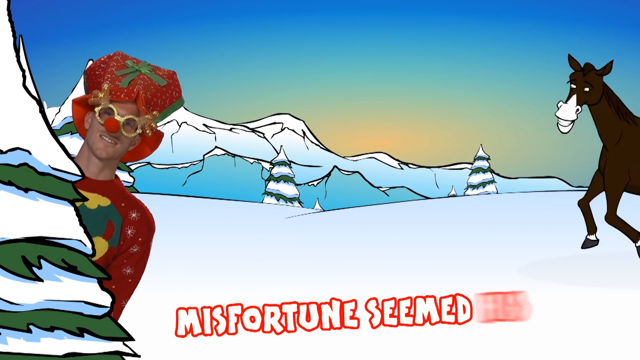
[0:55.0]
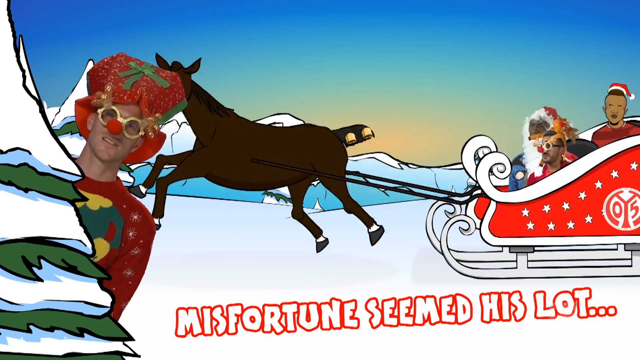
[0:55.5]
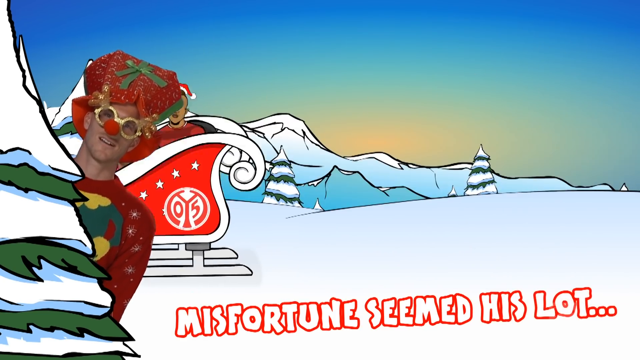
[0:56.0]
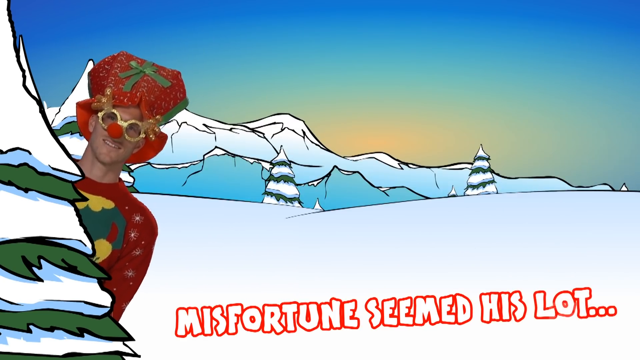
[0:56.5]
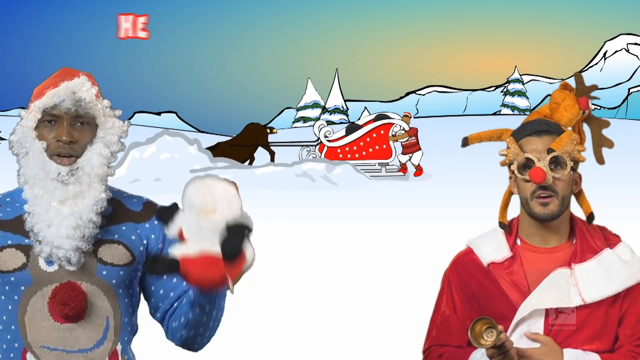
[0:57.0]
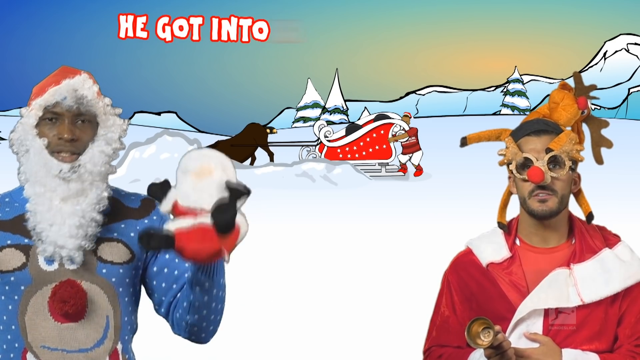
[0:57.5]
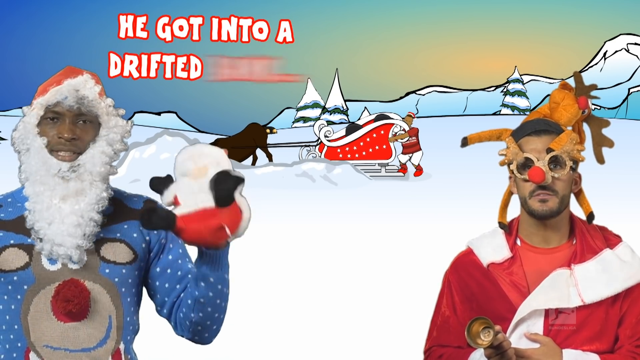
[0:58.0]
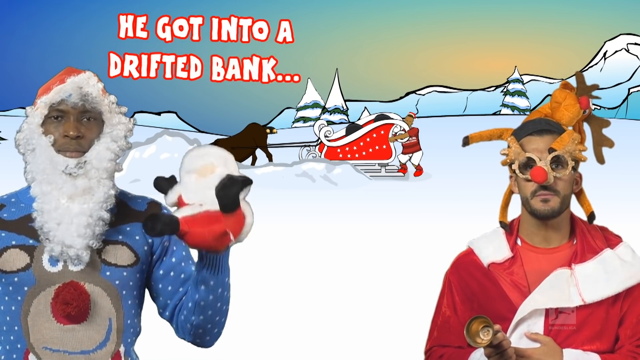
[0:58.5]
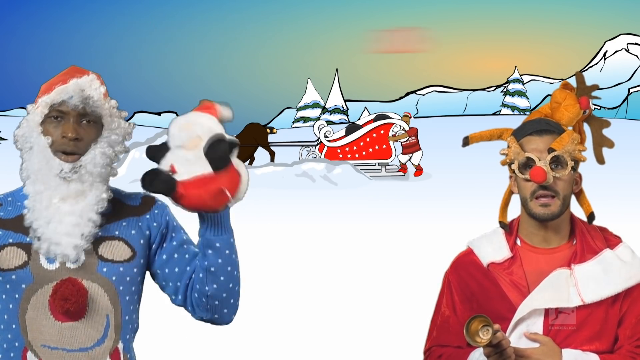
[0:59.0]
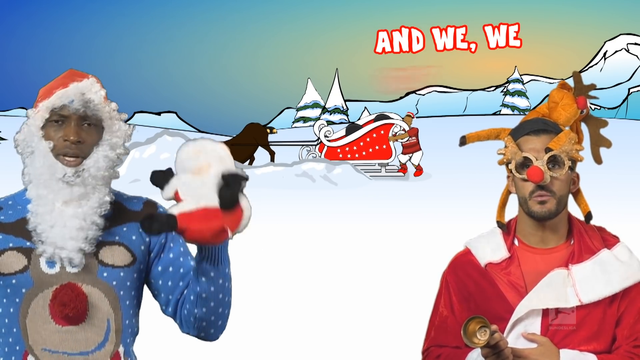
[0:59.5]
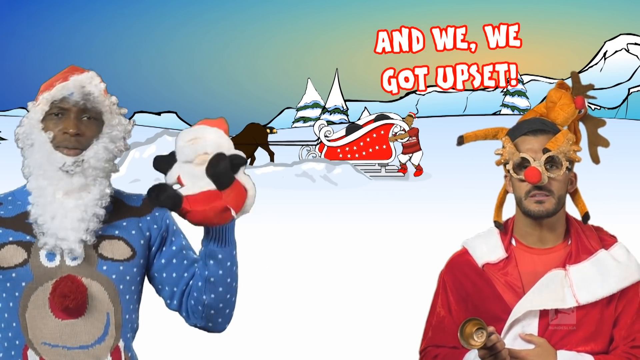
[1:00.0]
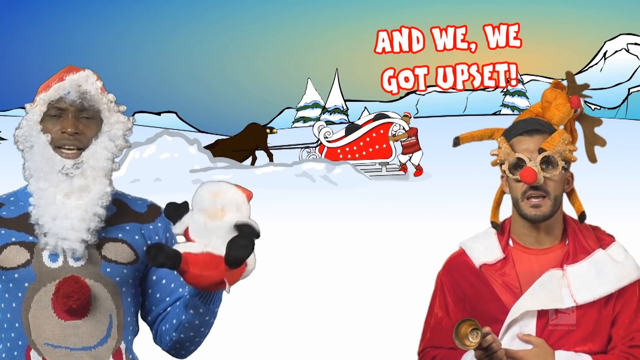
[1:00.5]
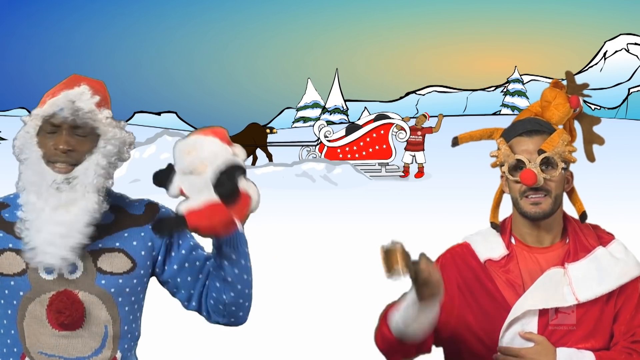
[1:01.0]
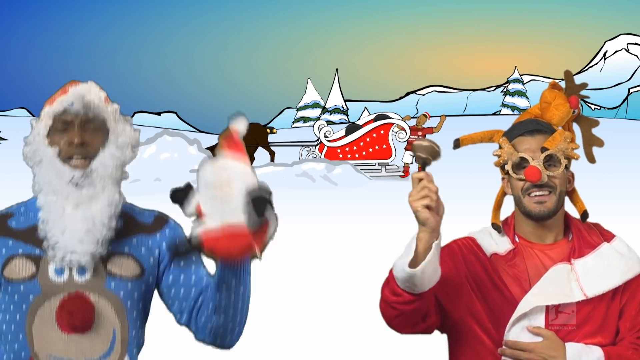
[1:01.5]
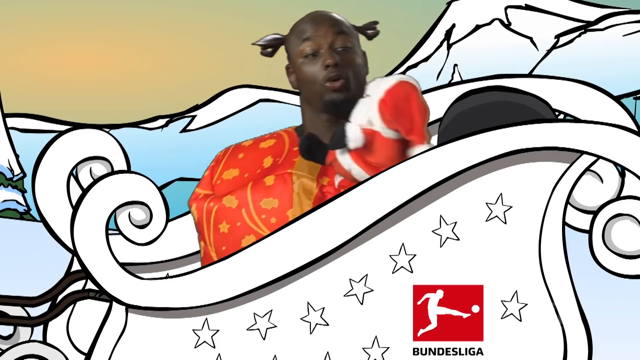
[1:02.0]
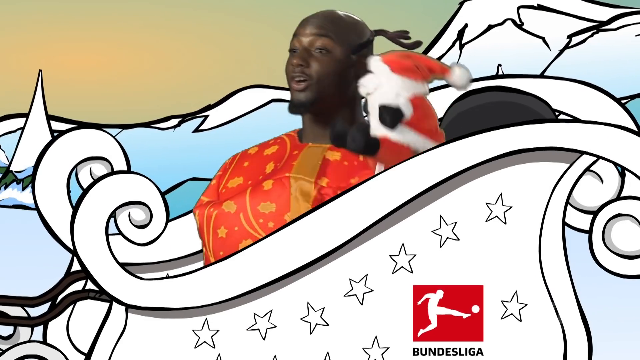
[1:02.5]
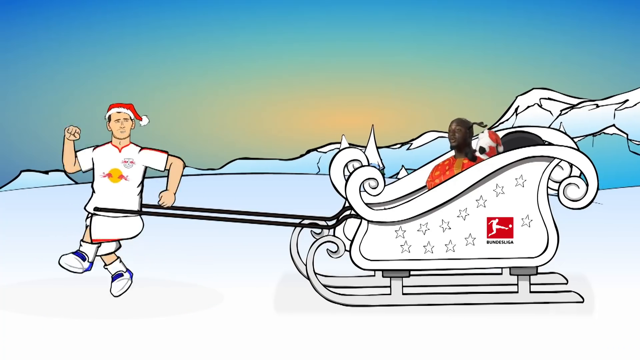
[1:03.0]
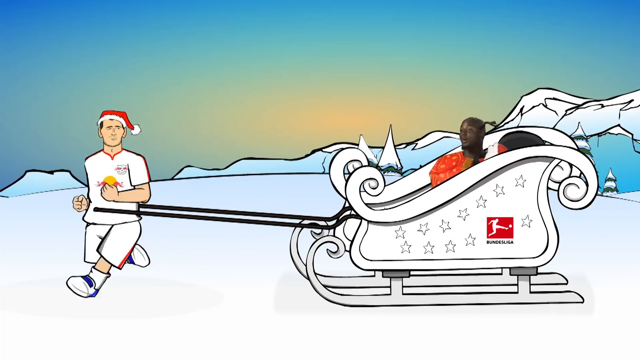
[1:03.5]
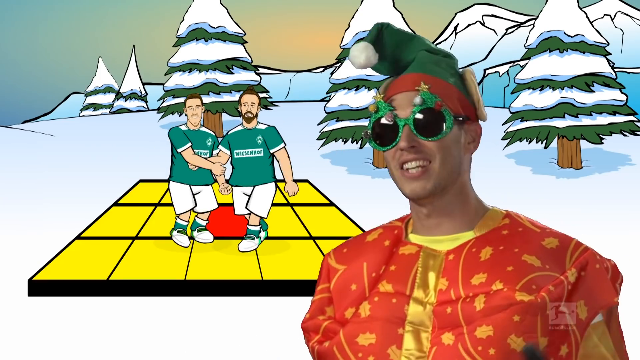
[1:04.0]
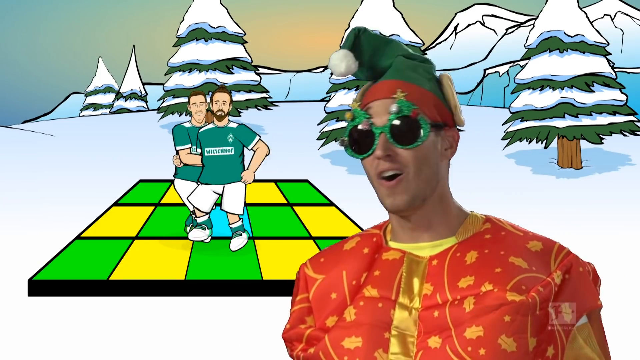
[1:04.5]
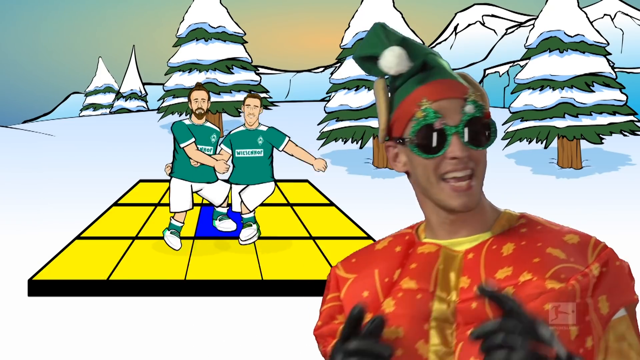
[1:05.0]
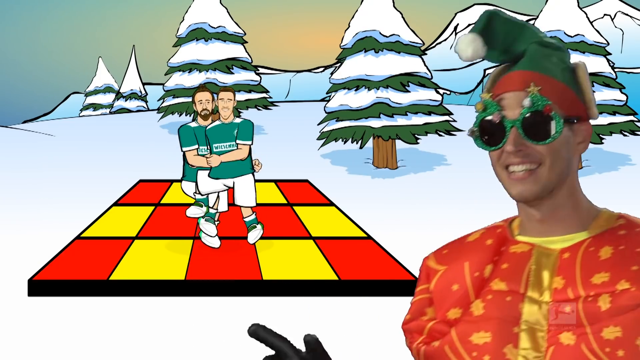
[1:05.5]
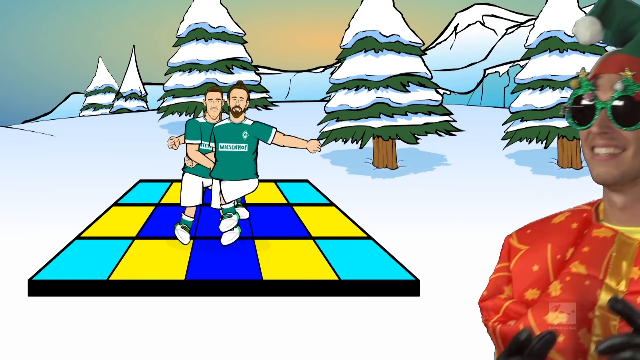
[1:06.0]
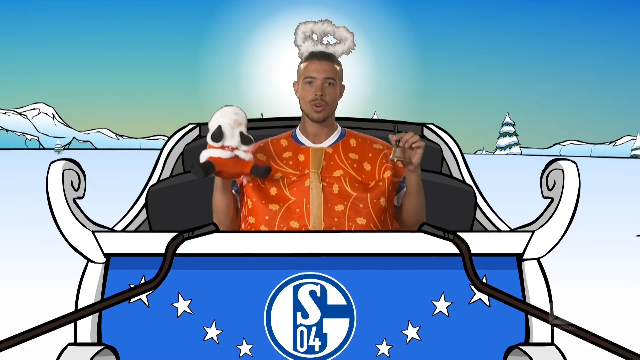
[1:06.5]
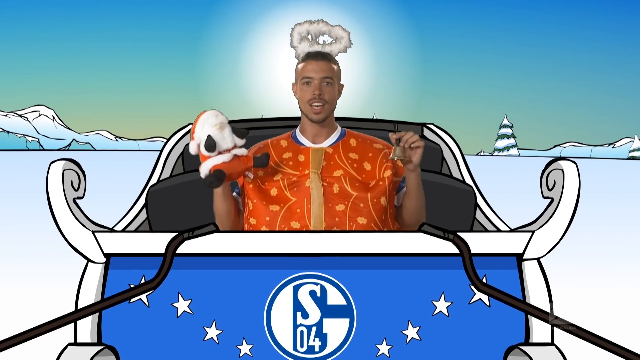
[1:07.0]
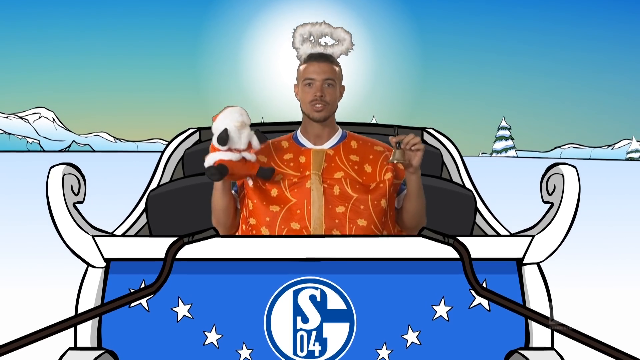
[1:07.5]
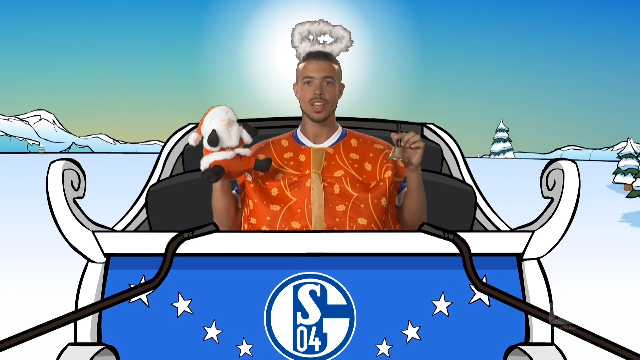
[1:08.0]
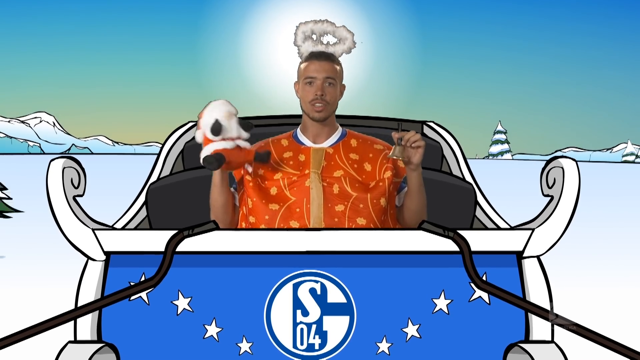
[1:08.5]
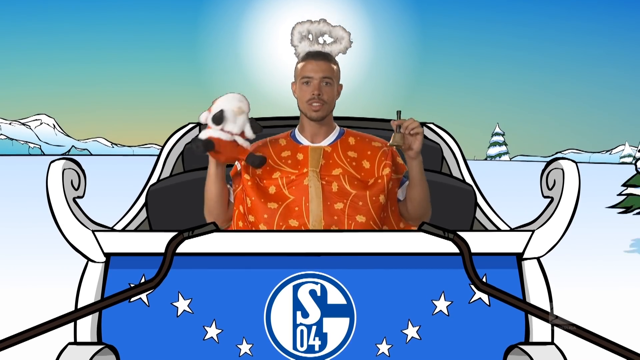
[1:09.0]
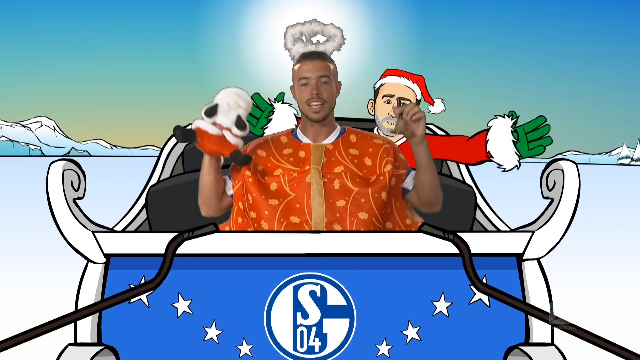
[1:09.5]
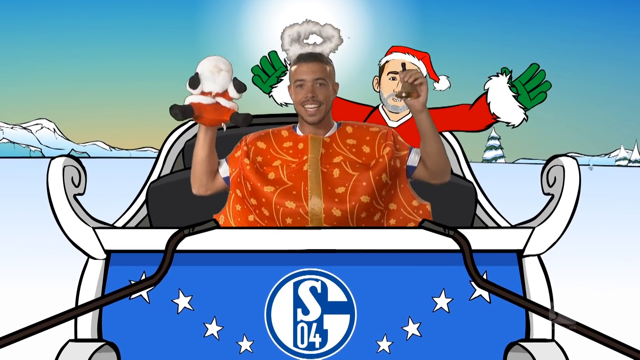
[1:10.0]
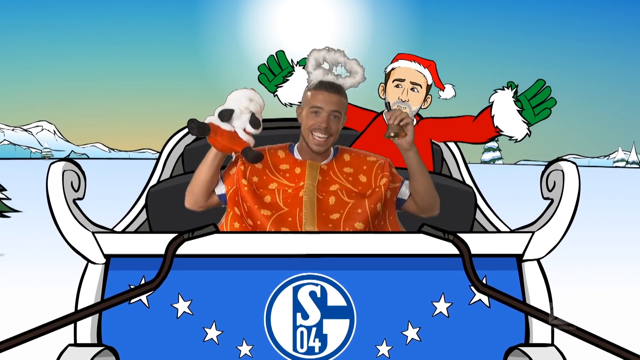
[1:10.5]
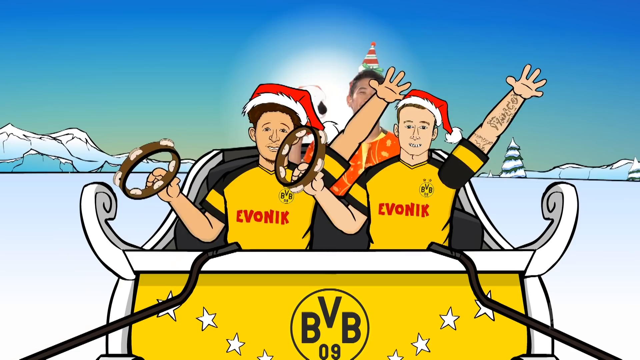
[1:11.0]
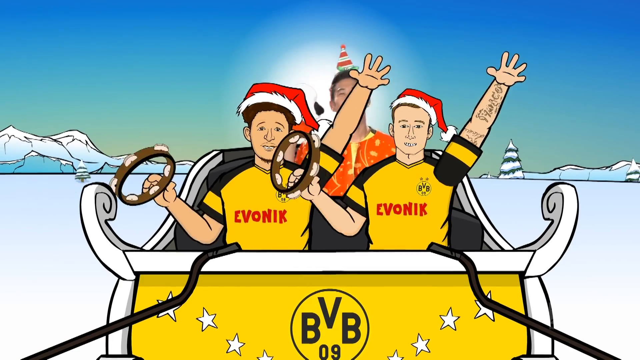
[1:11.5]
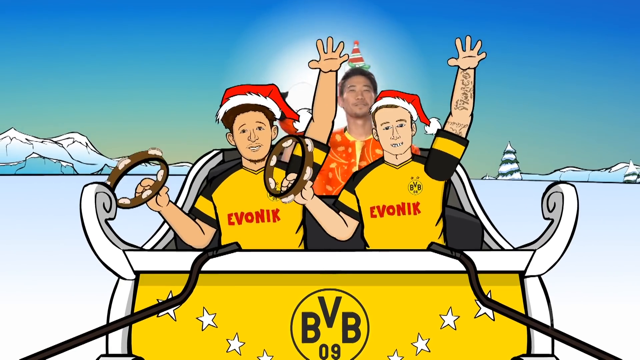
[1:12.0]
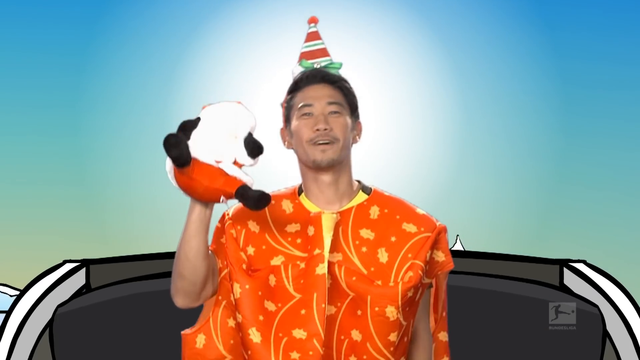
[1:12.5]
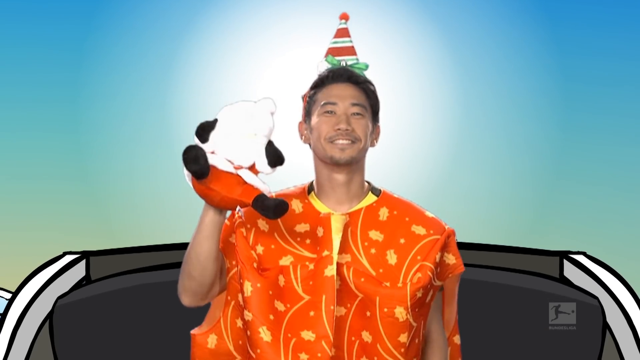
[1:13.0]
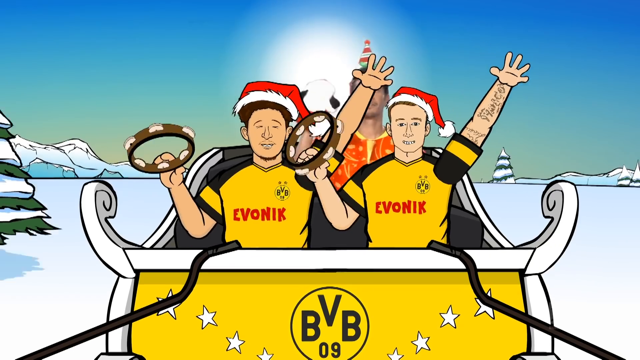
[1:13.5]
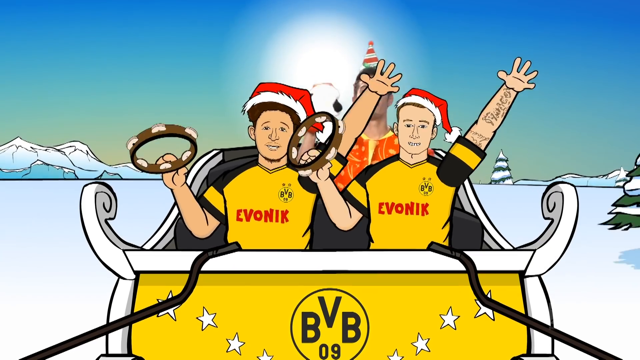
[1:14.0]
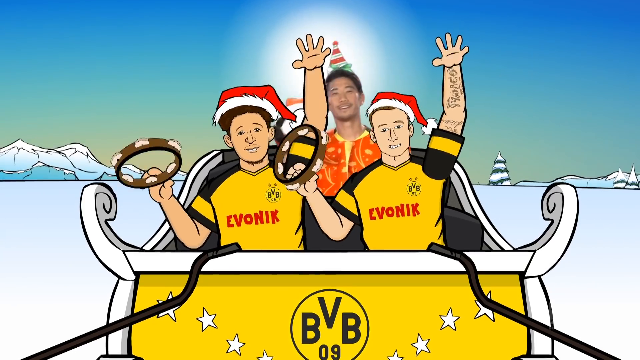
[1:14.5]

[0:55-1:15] The man who popped up from behind the tree finishes the line "Misfortune seemed his lot". In another scene there are possibly two new characters: one wears a crazy hat that looks like a reindeer and possibly a Santa jacket, and the man on the left wears the blue reindeer sweater, a white beard and hat, with a Santa puppet on his hand. One of the sleighs is in the background, and only the mule's back end is visible; it looks like it is going down into something, like digging a hole, and its head cannot be seen. Someone pushes the sleigh. The words say he got into a drifted bank and got upset. A white sleigh carries a real person who sings and dances along, with a Santa puppet; the sleigh is pulled by a running man in white shorts, a white shirt and a Santa hat. Another person sings wearing Christmas tree glasses, with a dance board, apparently a dance stage, behind him in yellow and teal. The two men from the car, in green shirts and white shorts, apparently some kind of sports players, dance along as the colors change. In a blue sled someone sings wearing an angel halo, with a Santa puppet on his wrist, and the animated man with the green gloves pops up behind him. In a yellow sleigh, two animated people in front wear matching jerseys reading "EVONIK", hold tambourines and raise their left arms; behind them a real person in a small white and red striped tree-type hat sings with a Santa puppet on his right hand. In a red sleigh, a man in the blue reindeer sweater and Santa hat snaps his fingers. In a blue sleigh, another man in a Santa reindeer sweater, a real person, is inside an animated block of ice, wearing the crazy hat, possibly a reindeer, and the man with the green gloves pops up behind him again. A man in the reindeer sweater, reindeer glasses and Mrs. Claus hat stands in front of an animated sports stadium, with the words "Now the ground is white" and "While you're young". A man is inside an animated snowman with a blue scarf and blue top hat; the head is a real human. The snowman's head, on the right-hand side, is kicked by what is probably a soccer player in red. Another person sings with animated people in the background, and the screen reads "And sing this sleighing song". In a salon or barbershop, a person in a blue jersey gets his hair cut, and the screen reads "244, his fee". The words "And crack, you take the lead" appear. Three men dance in a white sleigh, then one man dances in a different sleigh with an animated beat box behind him. Another sleigh carries two real men dressed as Santa with two animated sports players in the back. Finally six animated sports players appear.